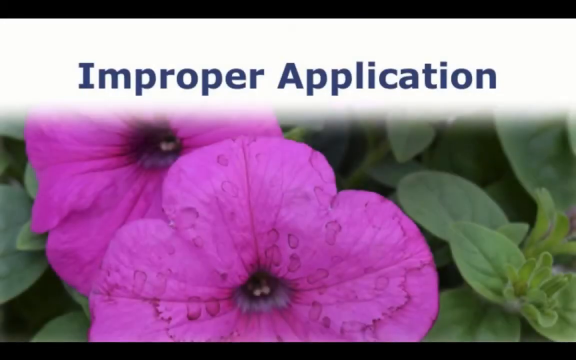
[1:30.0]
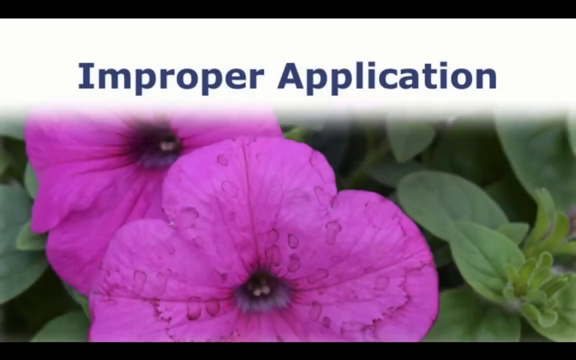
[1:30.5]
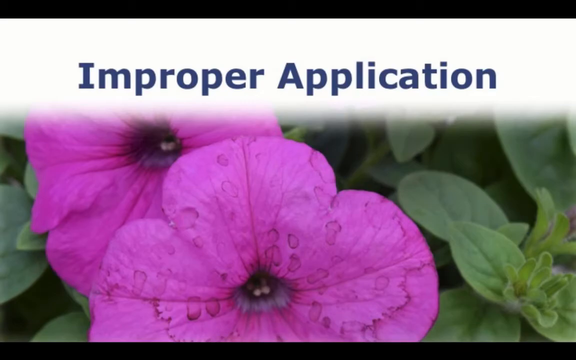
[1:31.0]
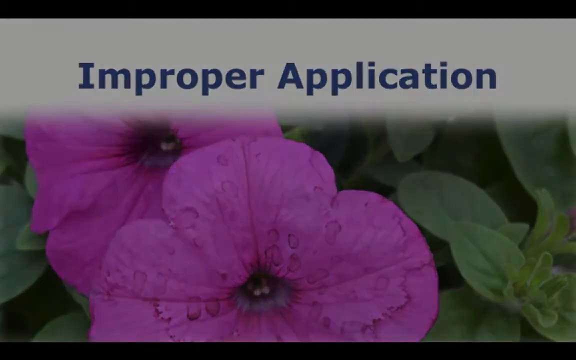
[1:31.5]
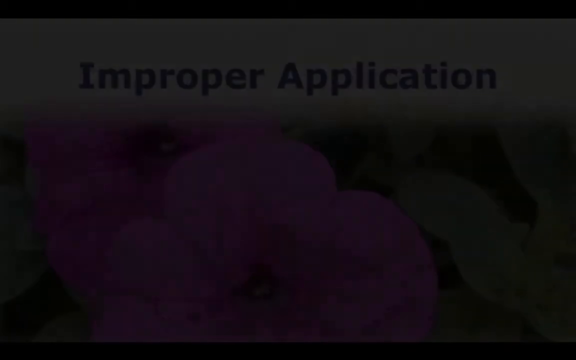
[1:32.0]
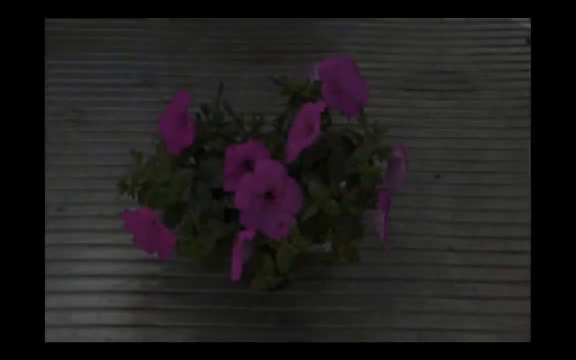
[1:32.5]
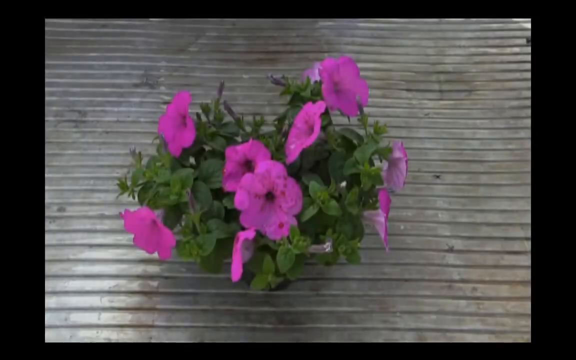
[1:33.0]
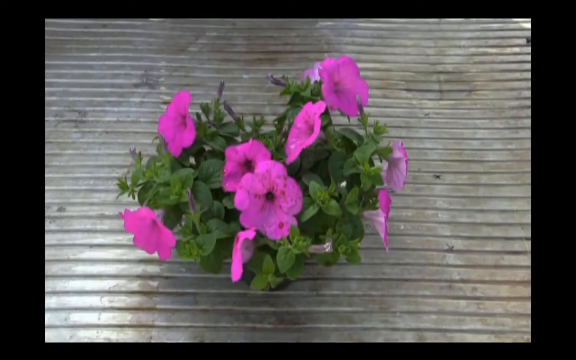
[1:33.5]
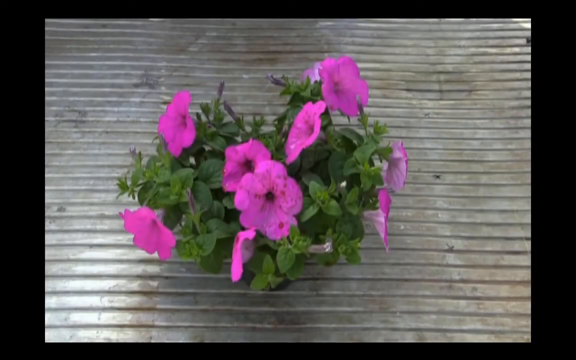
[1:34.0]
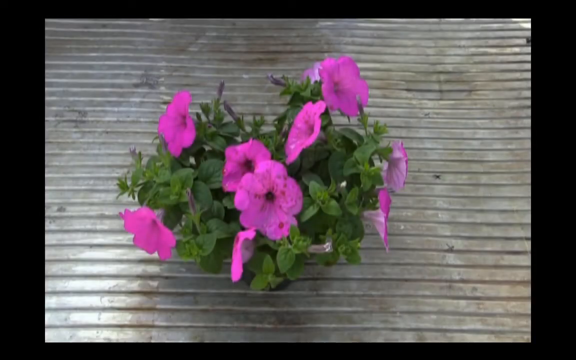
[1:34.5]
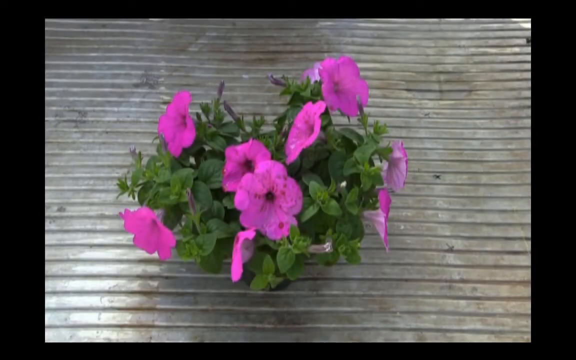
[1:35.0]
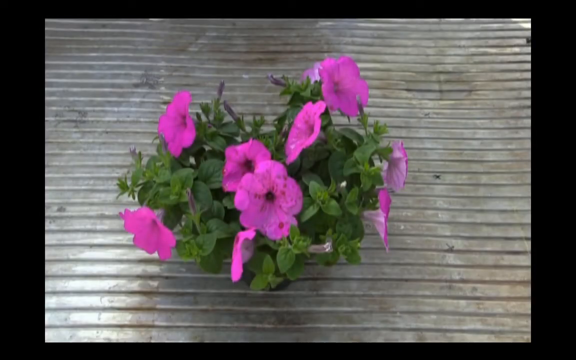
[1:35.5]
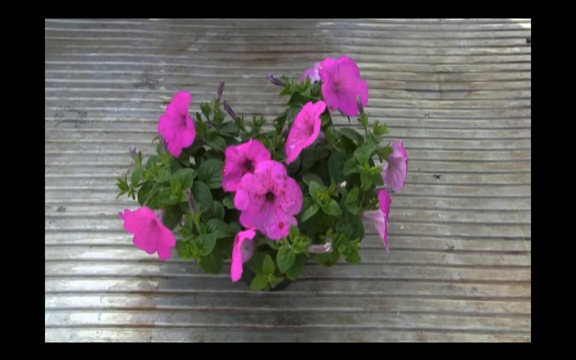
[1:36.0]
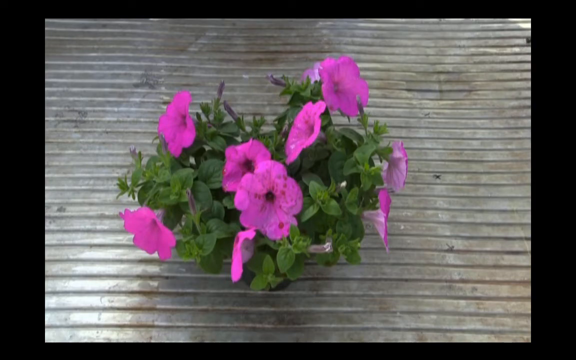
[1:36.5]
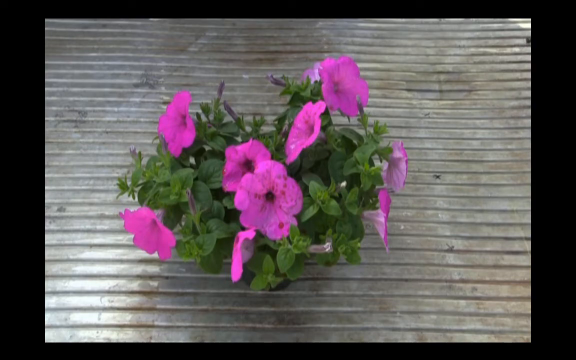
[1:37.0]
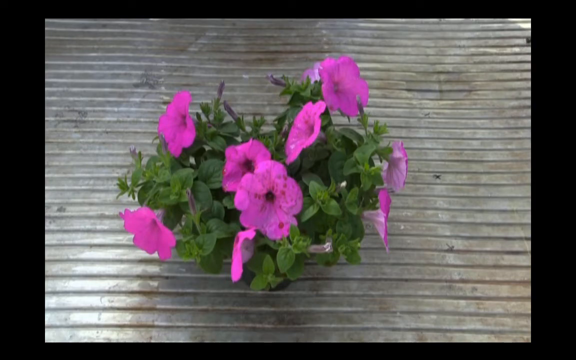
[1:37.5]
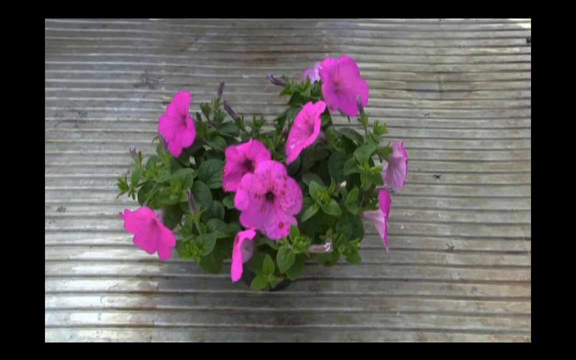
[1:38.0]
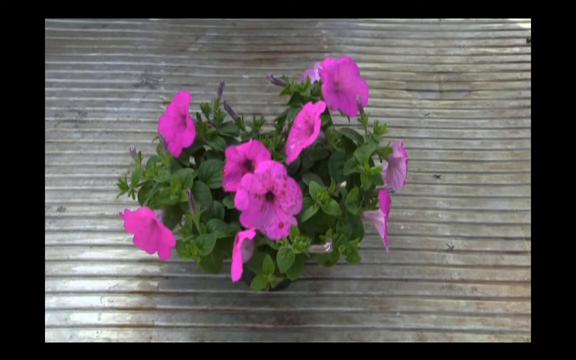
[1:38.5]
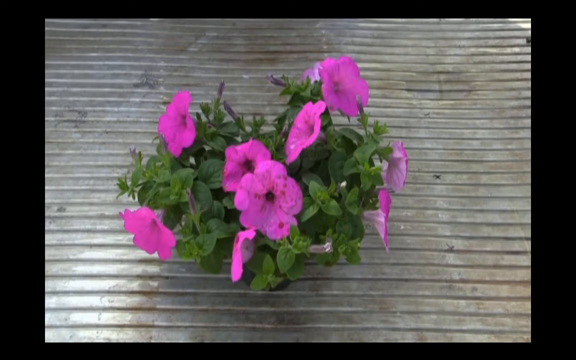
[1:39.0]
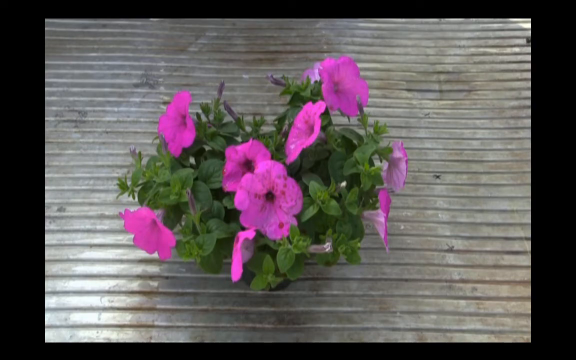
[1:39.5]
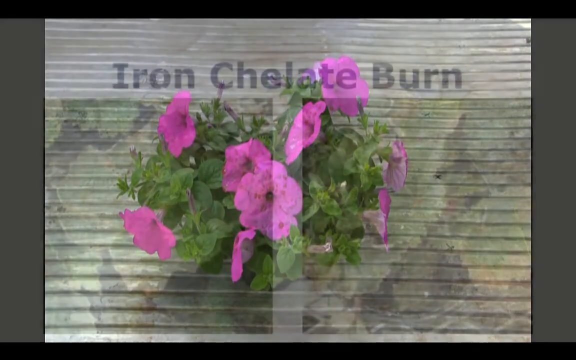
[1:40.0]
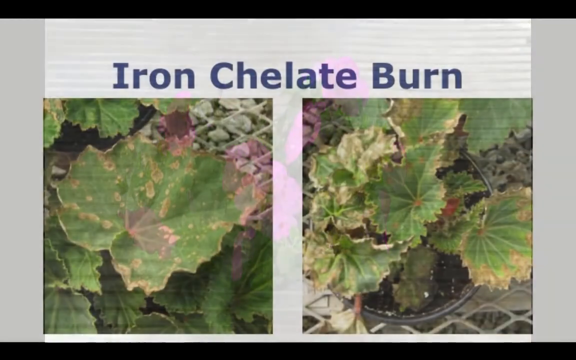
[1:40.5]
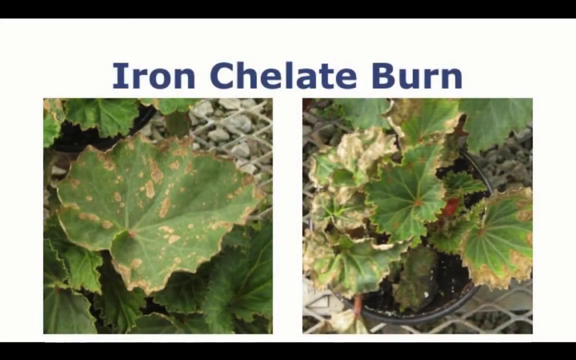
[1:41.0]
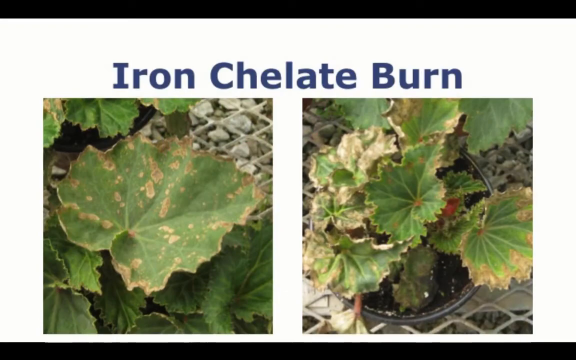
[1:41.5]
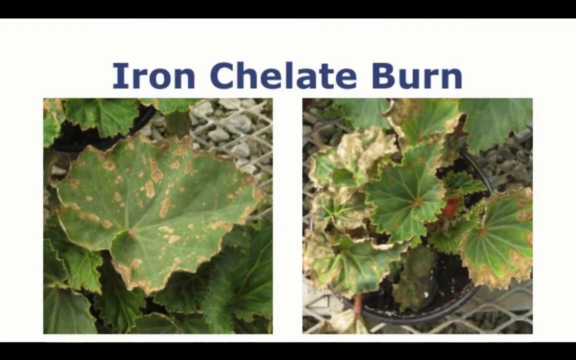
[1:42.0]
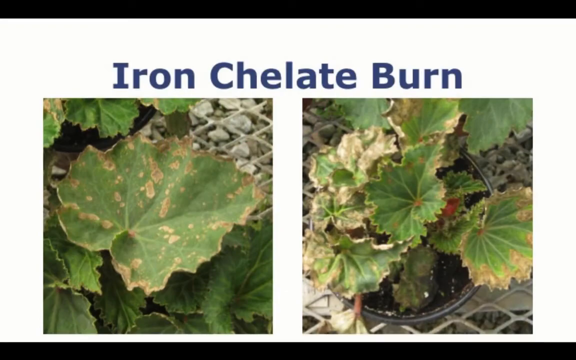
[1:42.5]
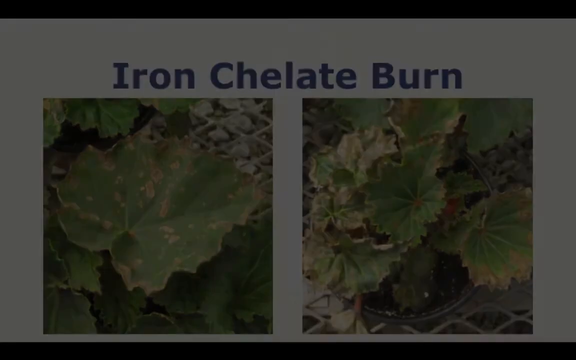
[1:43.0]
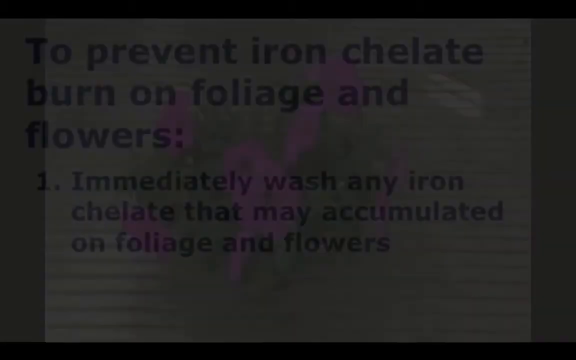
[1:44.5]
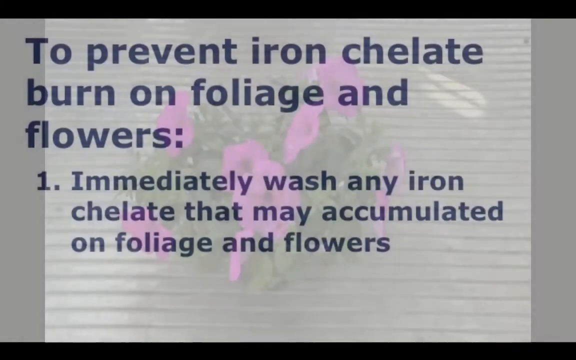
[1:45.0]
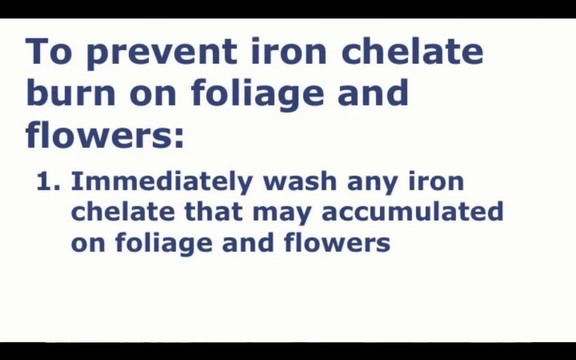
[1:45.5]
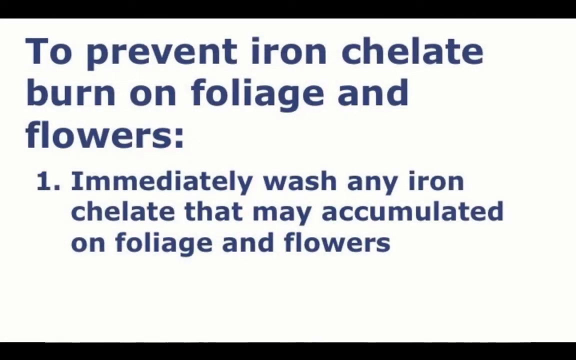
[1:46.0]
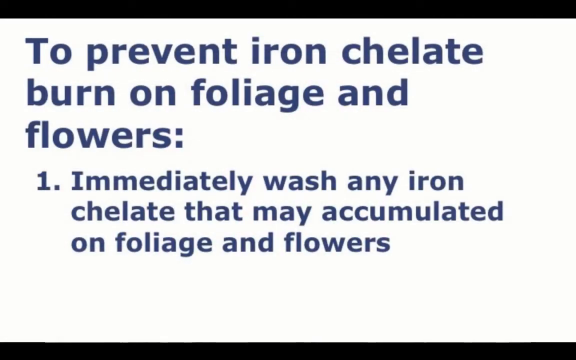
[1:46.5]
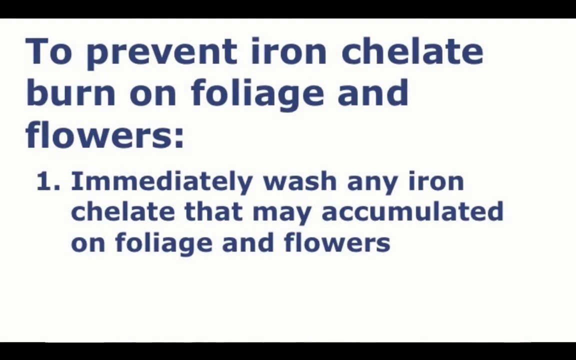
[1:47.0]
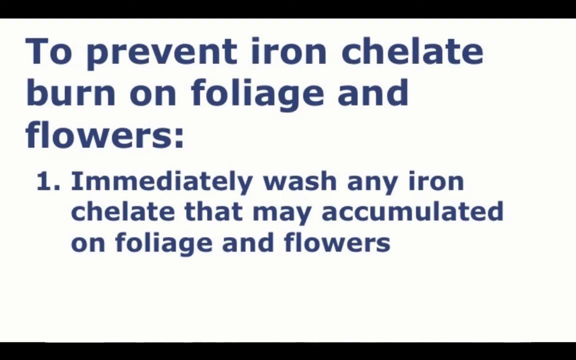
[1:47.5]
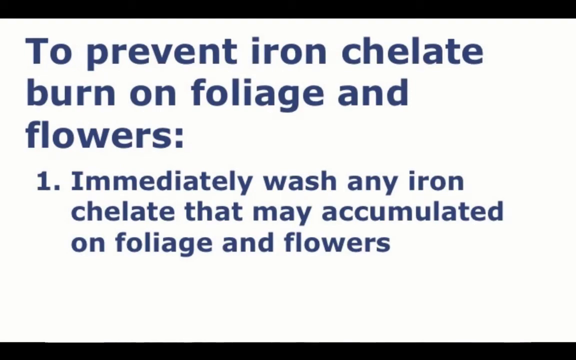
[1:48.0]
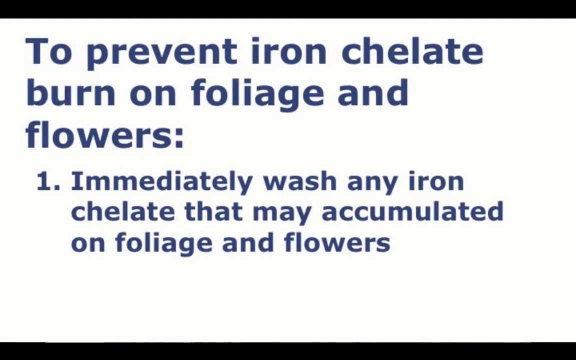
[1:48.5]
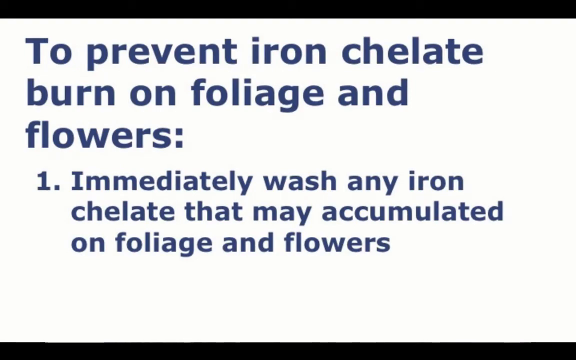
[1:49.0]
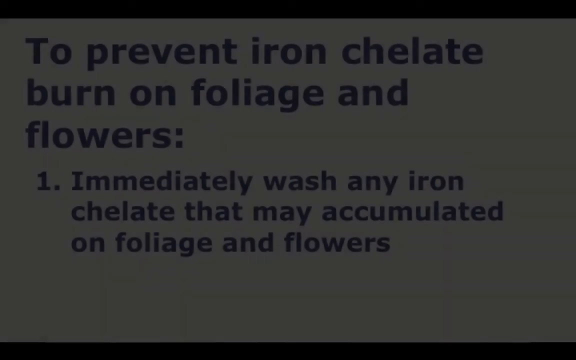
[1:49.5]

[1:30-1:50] Two flowers with giant purple leaves covered in water droplets are shown. Next, a single green flower with alternating purple leaves, put on top of corrugated iron, appears; it looks like it is in the shade, and its leaves look like they have droplets. Another picture then shows two different flowers, one on the left and one on the right, separated by a line, with ion chelate burns; parts of the flowers look bent and dry, and they are not in good condition. Then text in dark blue on a white background reads "To prevent iron chelate burn on foliage and flowers. Step number 1. Immediately wash any iron chelate that may accumulated on foliage and flowers."